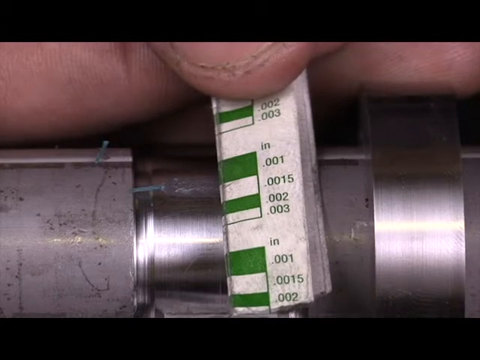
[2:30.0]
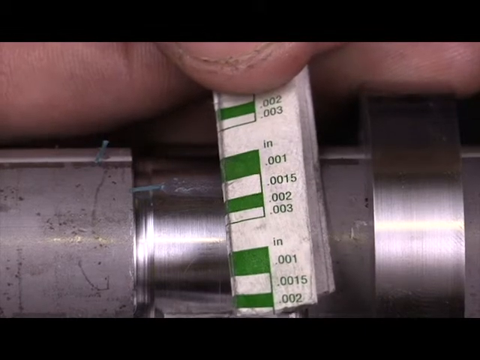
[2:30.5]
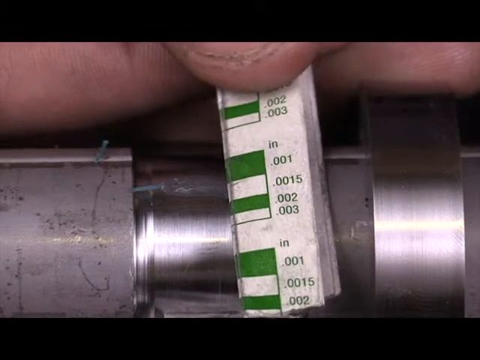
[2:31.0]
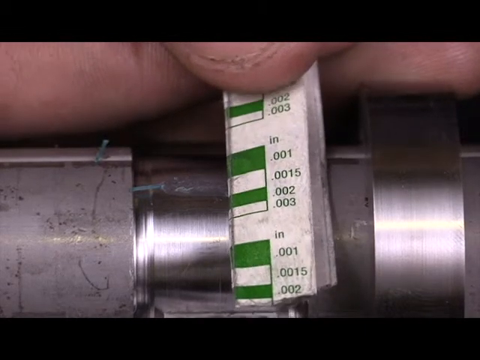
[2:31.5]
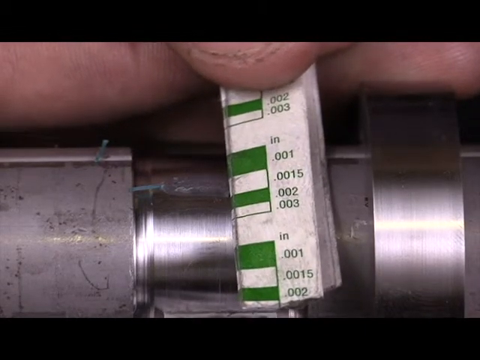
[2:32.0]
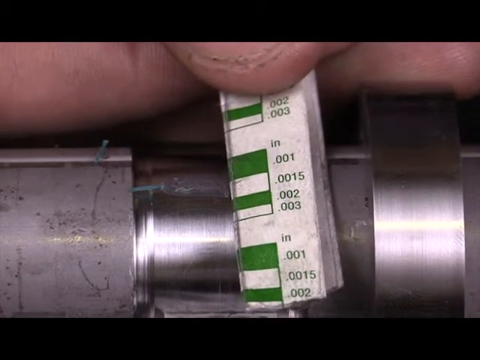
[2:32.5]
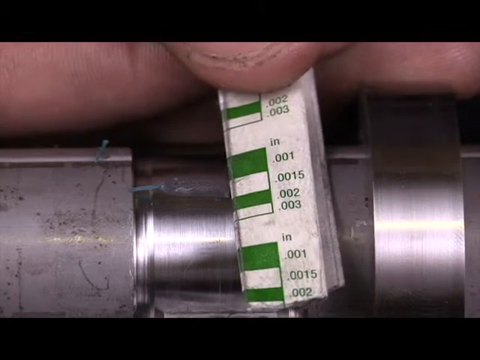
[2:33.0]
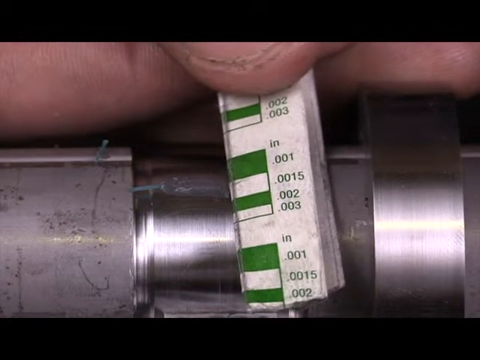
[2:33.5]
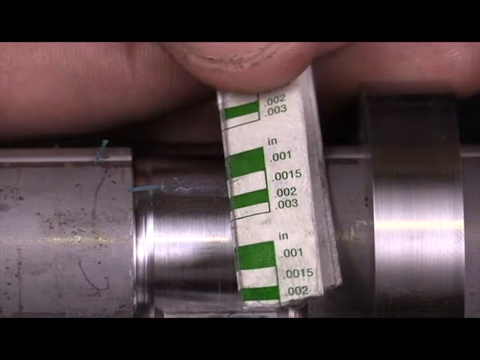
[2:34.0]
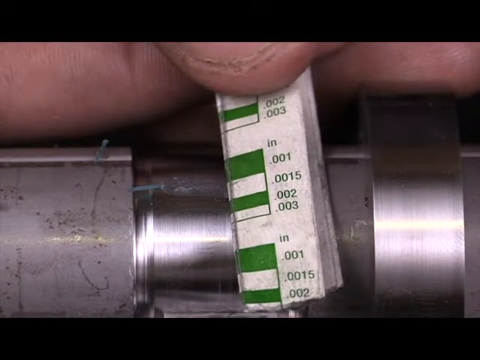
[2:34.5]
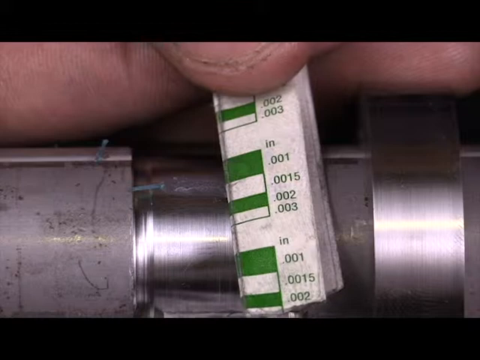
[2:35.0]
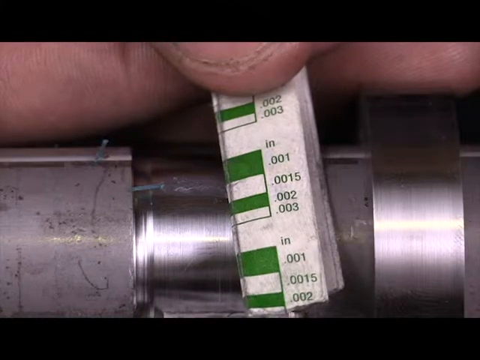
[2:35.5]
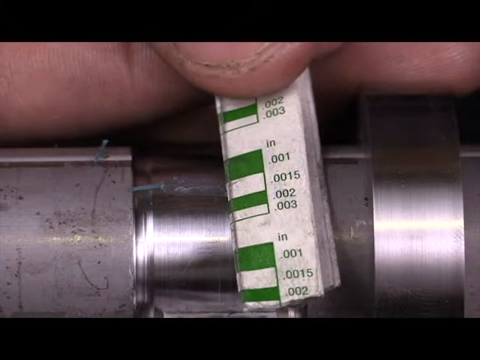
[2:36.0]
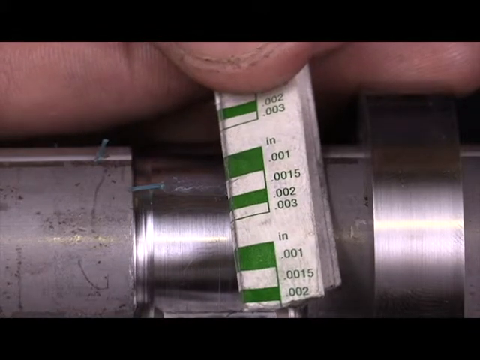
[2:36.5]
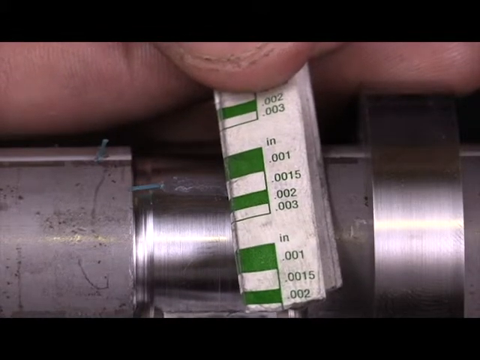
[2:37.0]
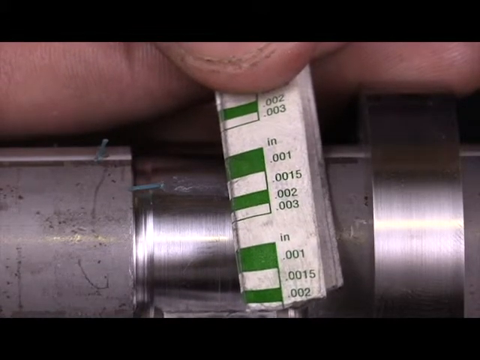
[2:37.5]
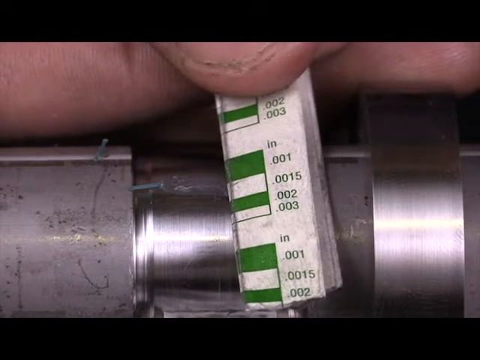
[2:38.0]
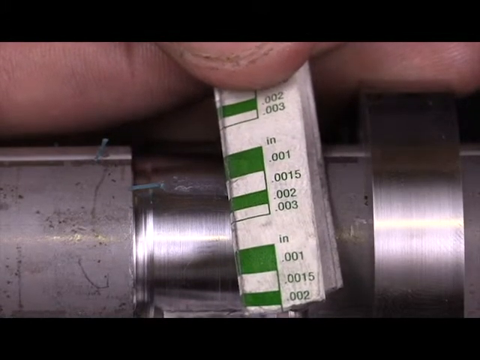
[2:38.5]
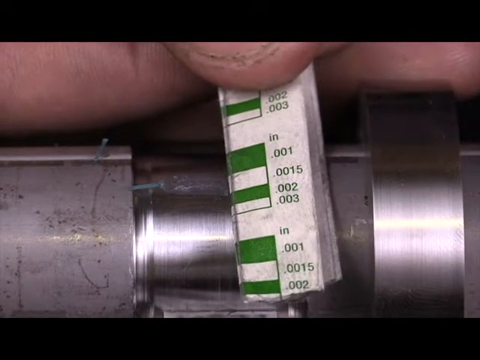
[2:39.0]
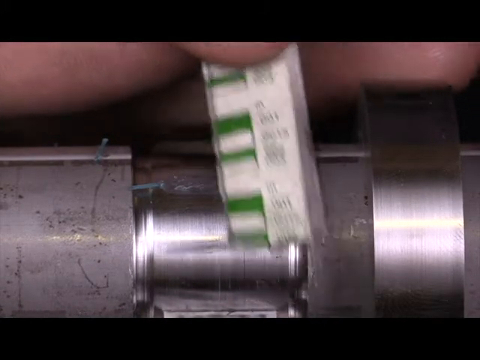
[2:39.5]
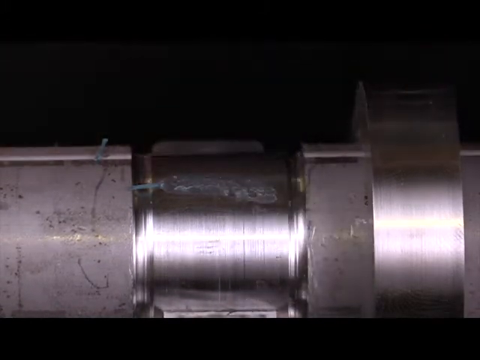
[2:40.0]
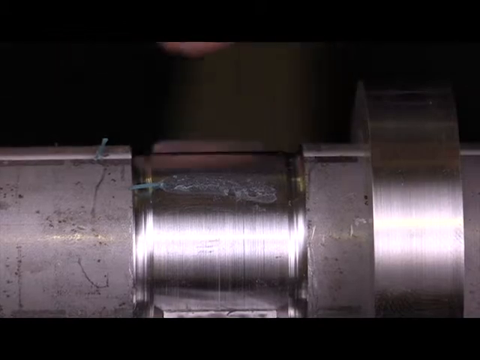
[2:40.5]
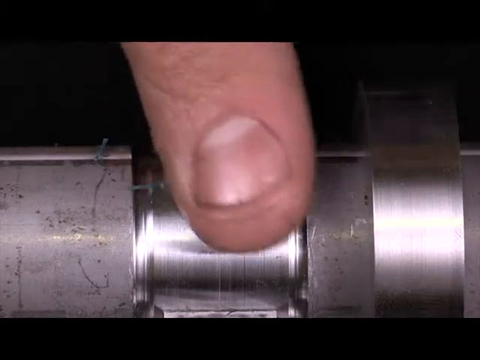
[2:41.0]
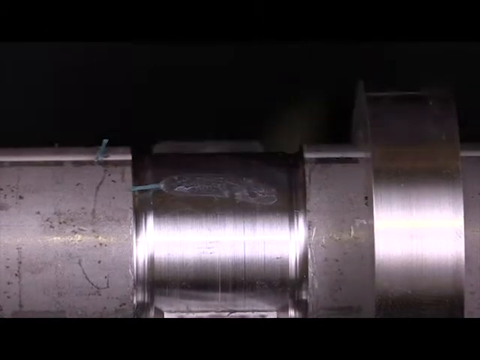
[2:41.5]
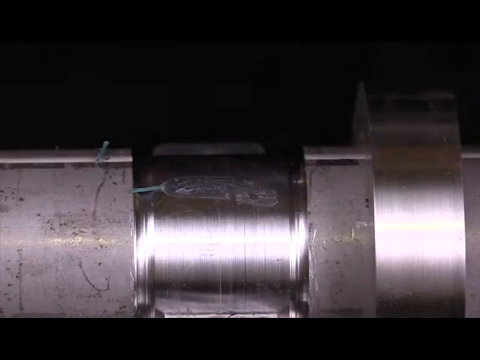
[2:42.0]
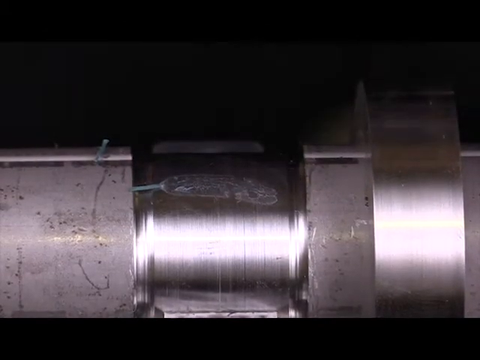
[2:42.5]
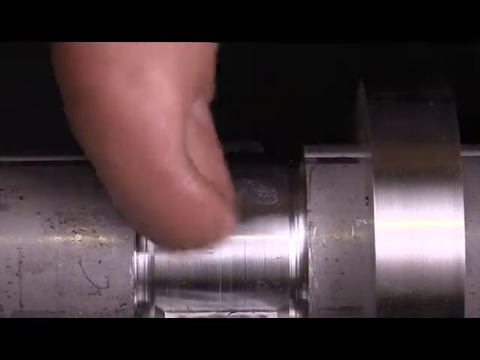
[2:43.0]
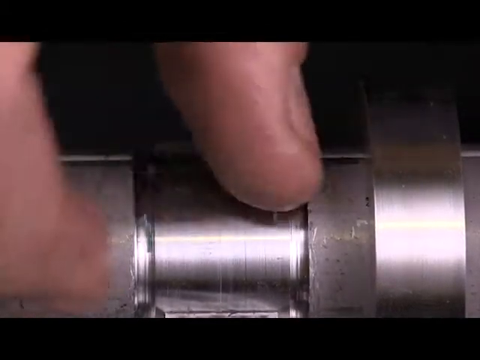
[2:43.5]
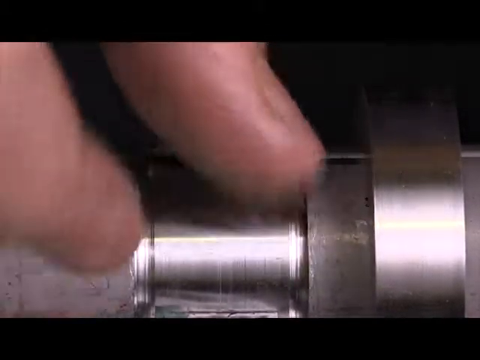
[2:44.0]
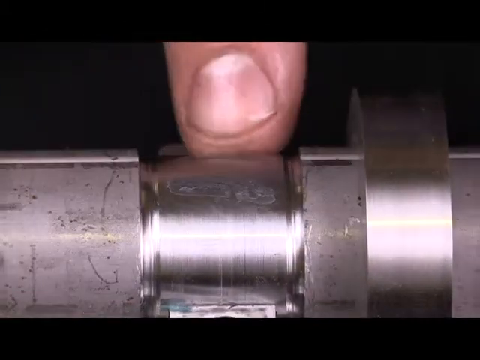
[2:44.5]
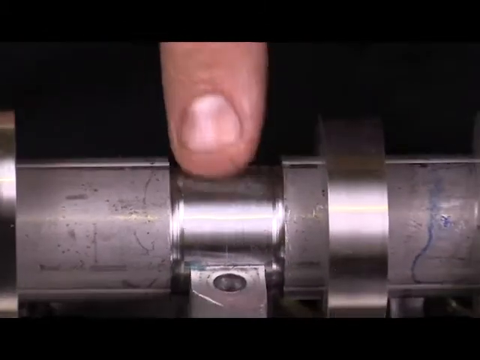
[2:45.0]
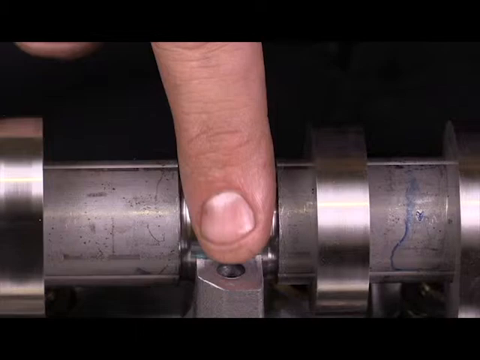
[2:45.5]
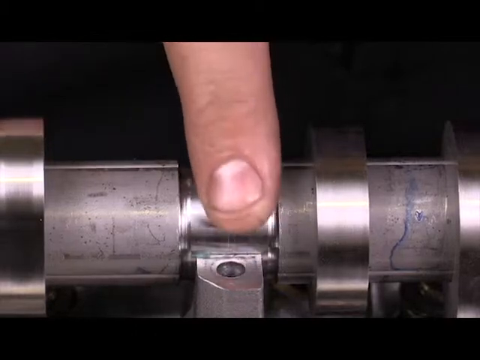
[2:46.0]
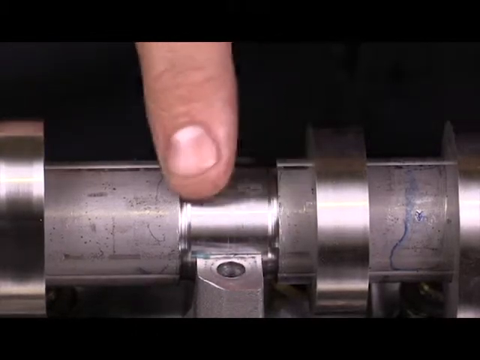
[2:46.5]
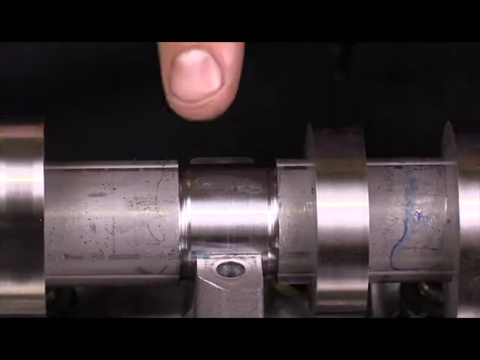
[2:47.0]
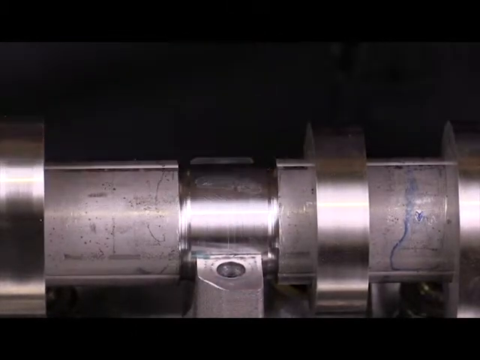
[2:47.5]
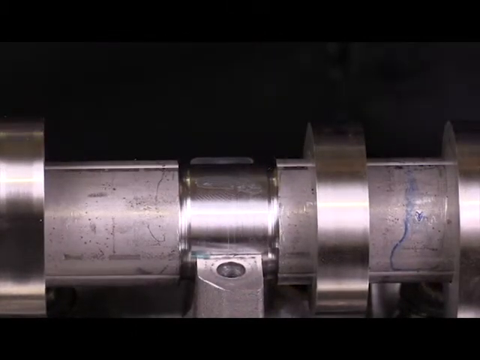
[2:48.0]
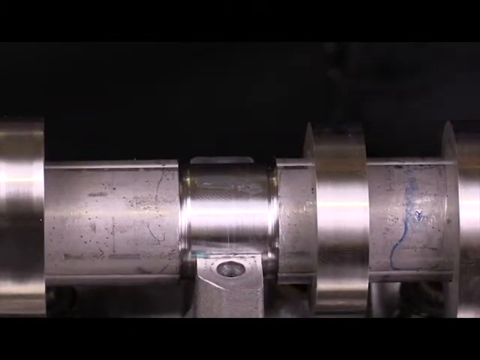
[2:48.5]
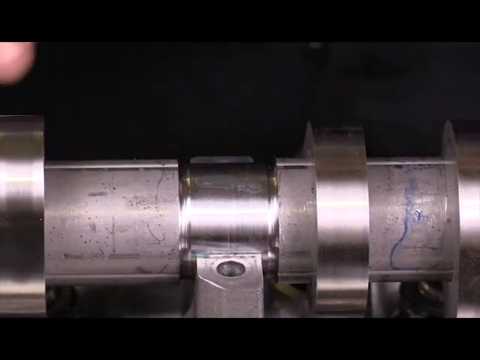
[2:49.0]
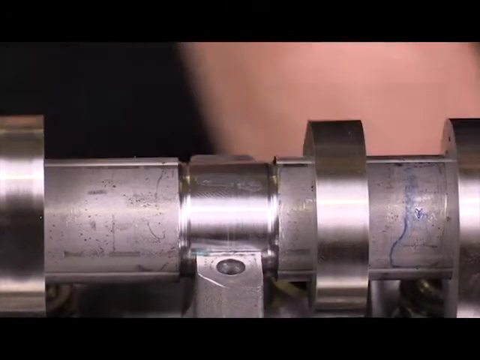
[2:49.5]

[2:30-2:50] A cylinder-shaped piece of metal, shiny chrome with a kind of duller gray part, is shown very zoomed in. A vertical, rectangular shape is held up against the cylinder by a very white male finger. The piece of paper moves ever so slightly up and down, almost as if the person is talking while bobbing it. The person then pulls it away and touches the cylinder with one finger, pulls away, comes back and starts touching the shiny part, almost rubbing the shiny chrome piece with the pointer finger. They pat it a few times with the finger and then pull it away. The whole shot is very zoomed in and focused on the metal, the finger and the measuring device.